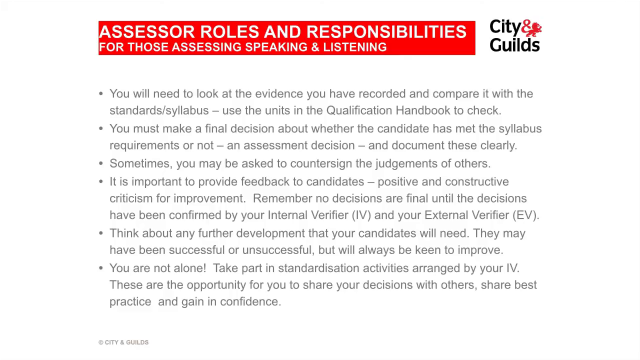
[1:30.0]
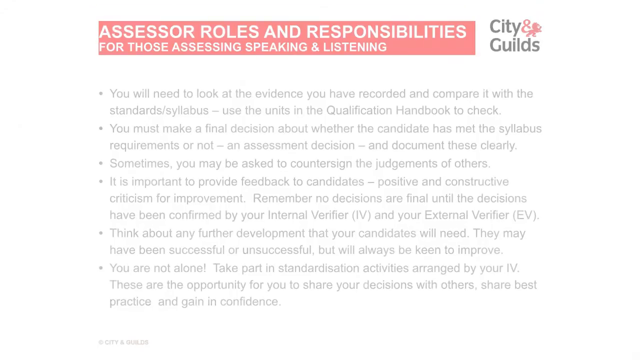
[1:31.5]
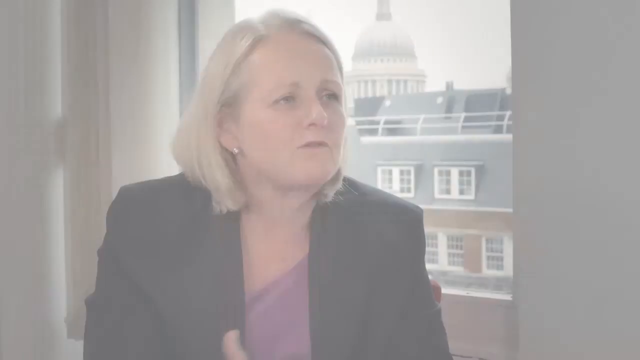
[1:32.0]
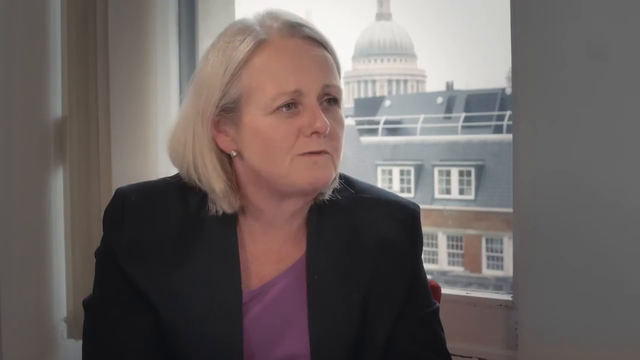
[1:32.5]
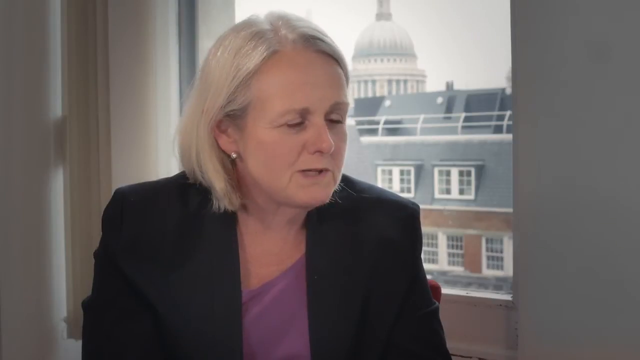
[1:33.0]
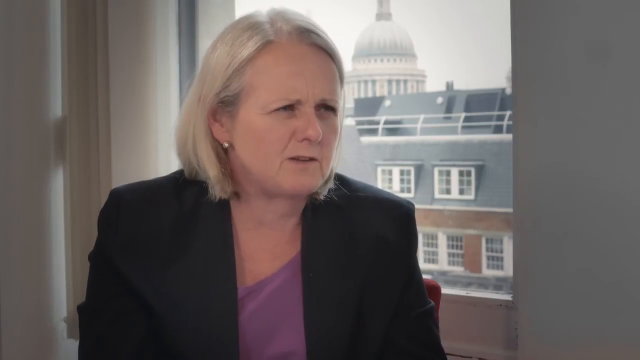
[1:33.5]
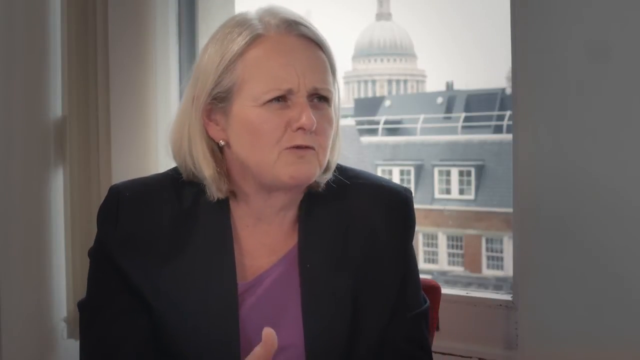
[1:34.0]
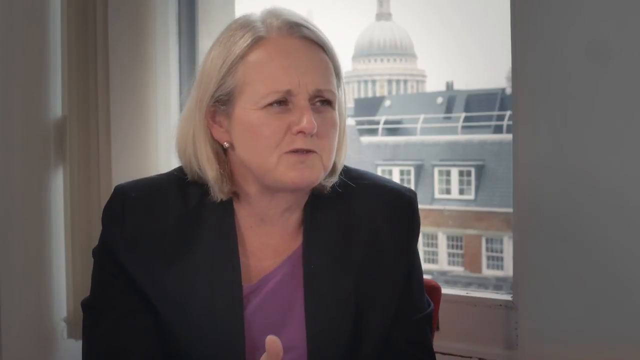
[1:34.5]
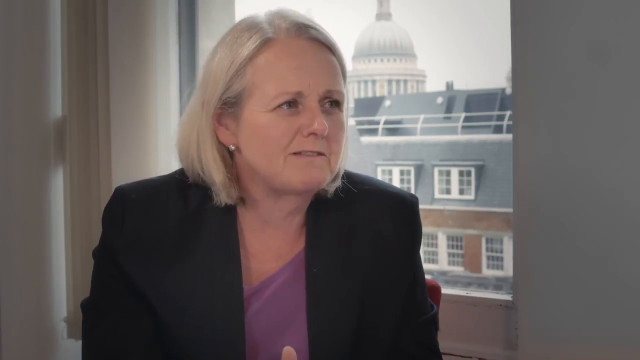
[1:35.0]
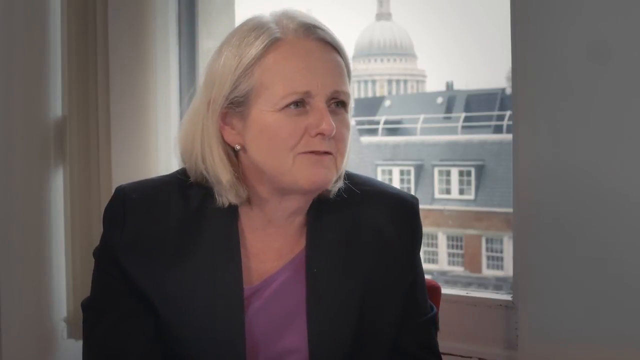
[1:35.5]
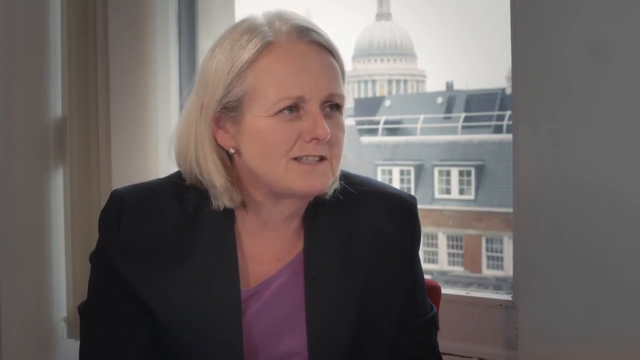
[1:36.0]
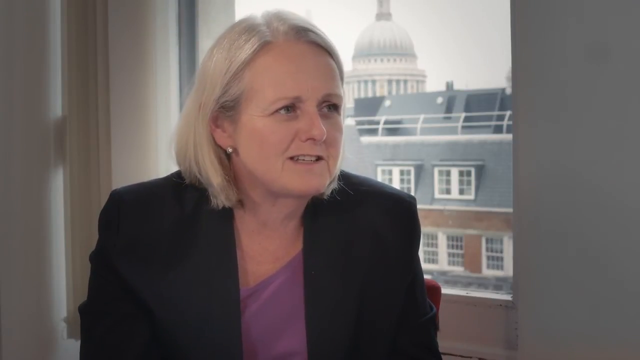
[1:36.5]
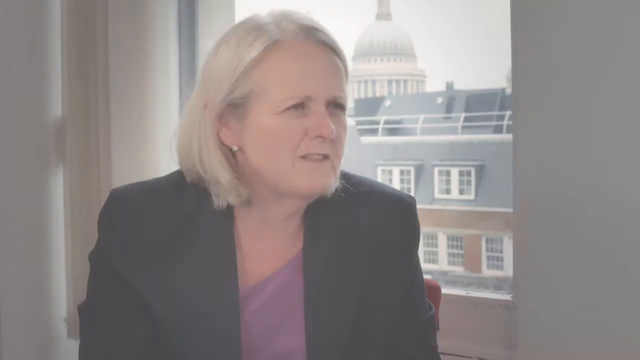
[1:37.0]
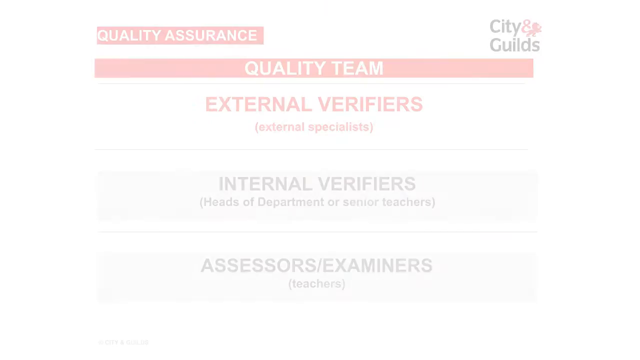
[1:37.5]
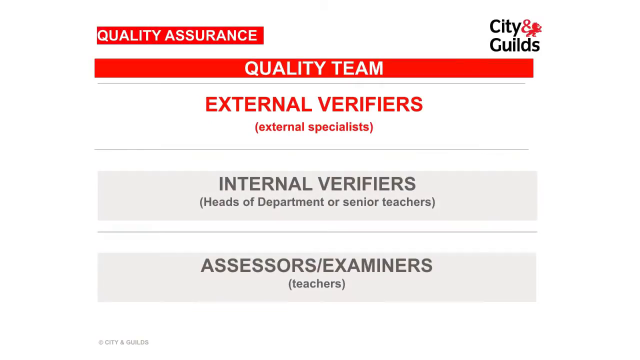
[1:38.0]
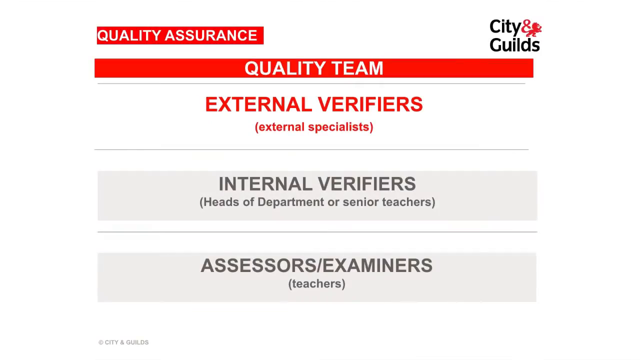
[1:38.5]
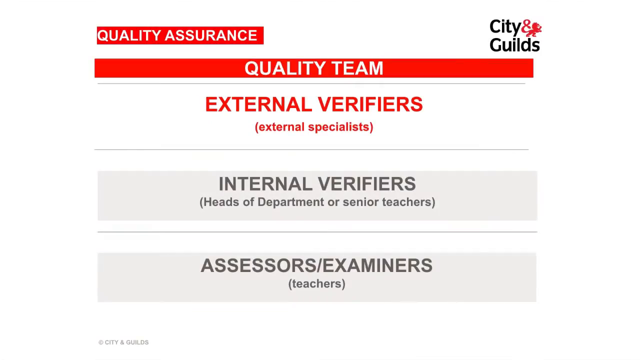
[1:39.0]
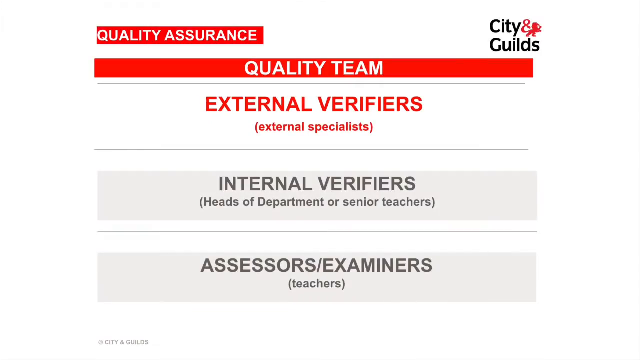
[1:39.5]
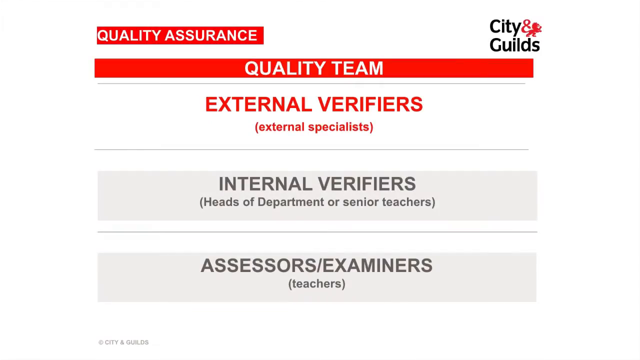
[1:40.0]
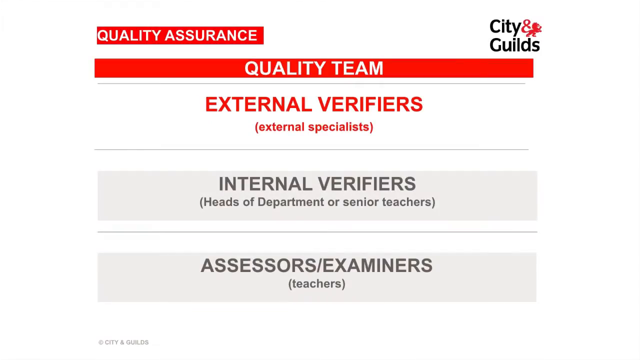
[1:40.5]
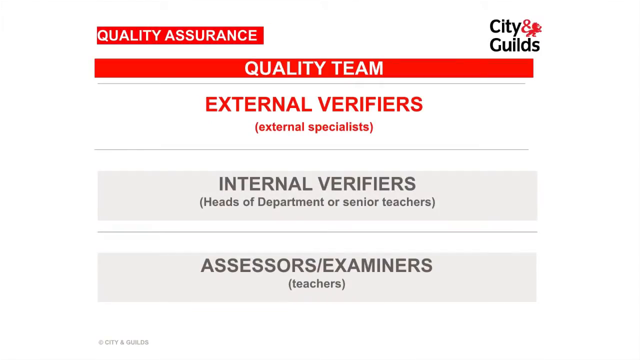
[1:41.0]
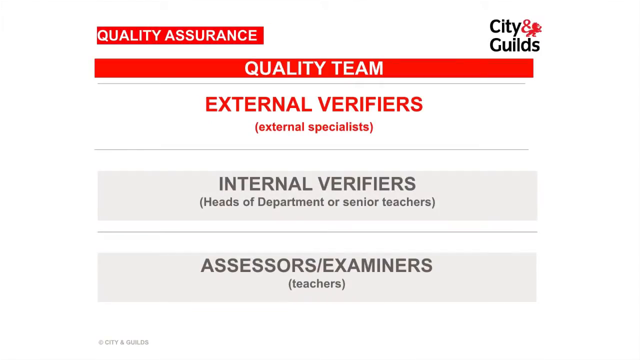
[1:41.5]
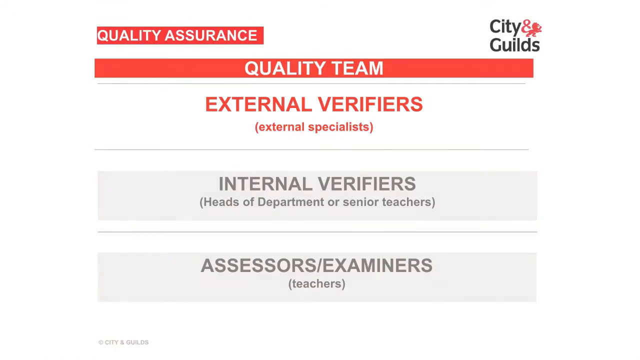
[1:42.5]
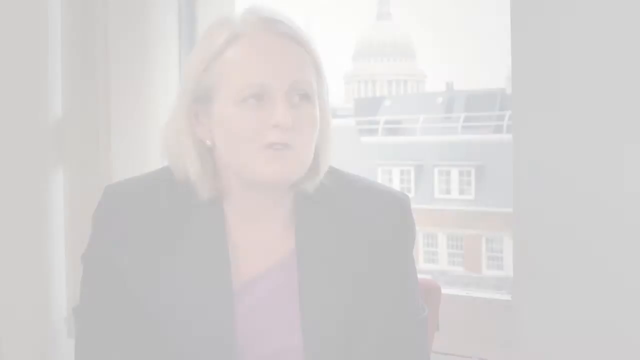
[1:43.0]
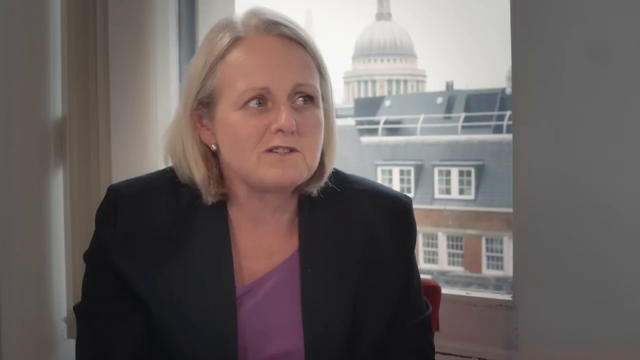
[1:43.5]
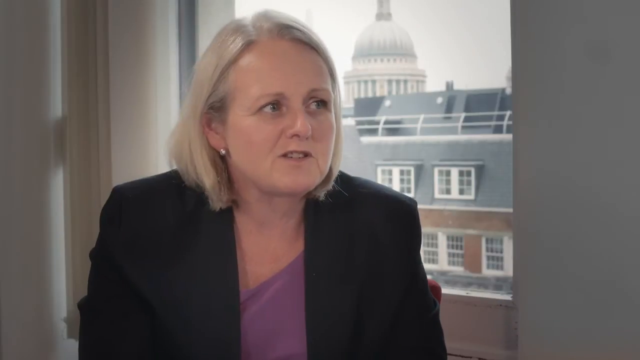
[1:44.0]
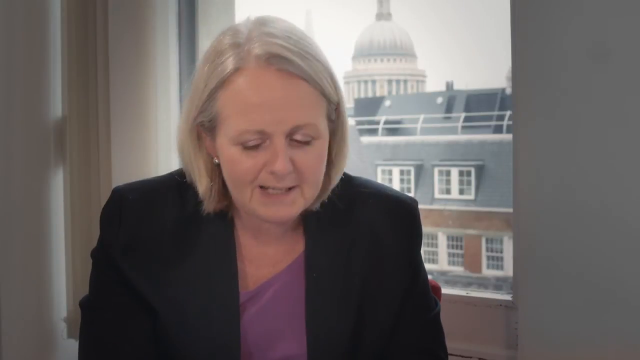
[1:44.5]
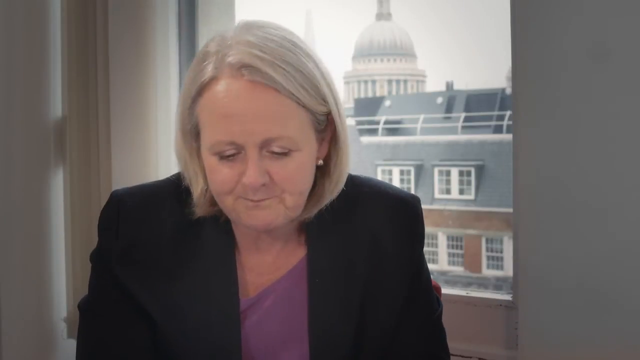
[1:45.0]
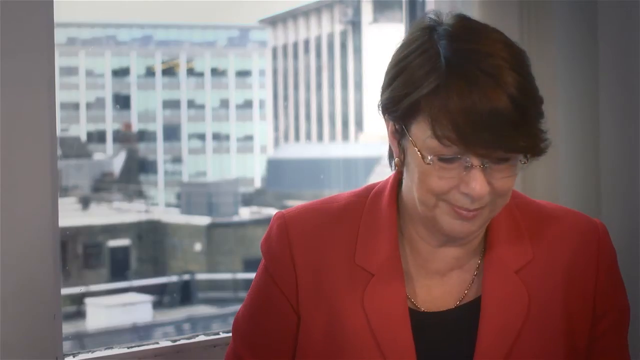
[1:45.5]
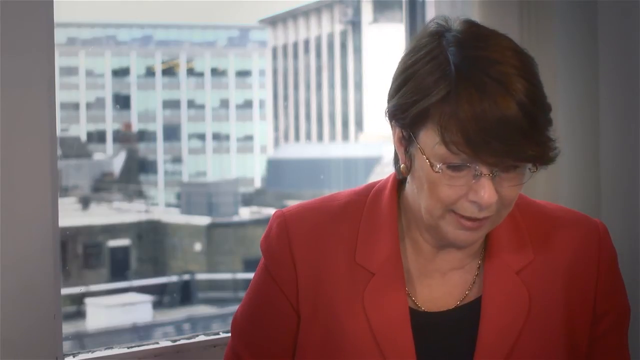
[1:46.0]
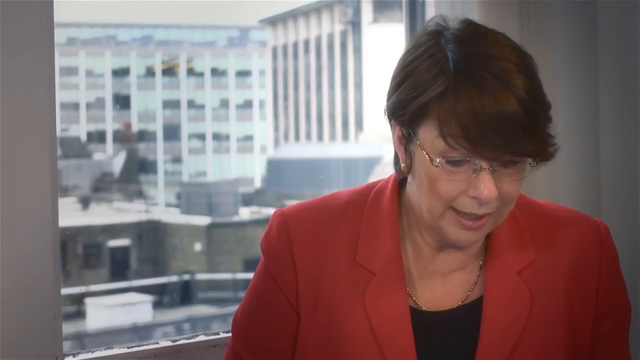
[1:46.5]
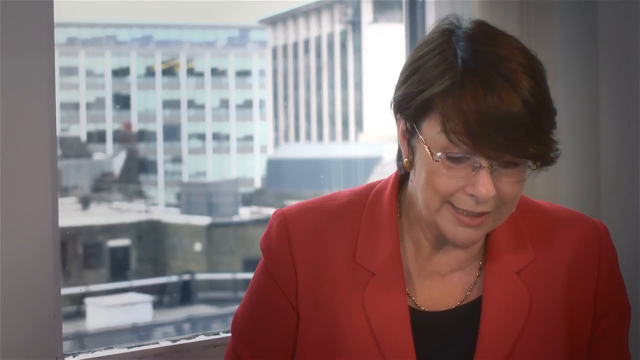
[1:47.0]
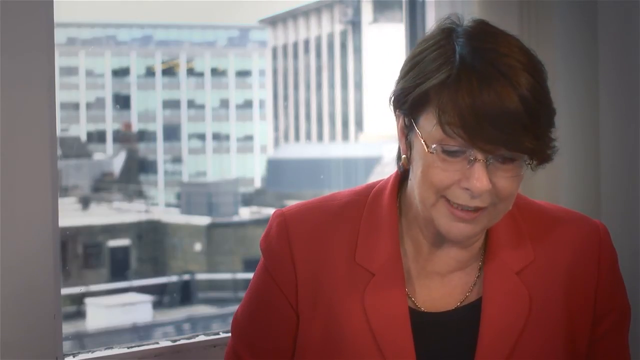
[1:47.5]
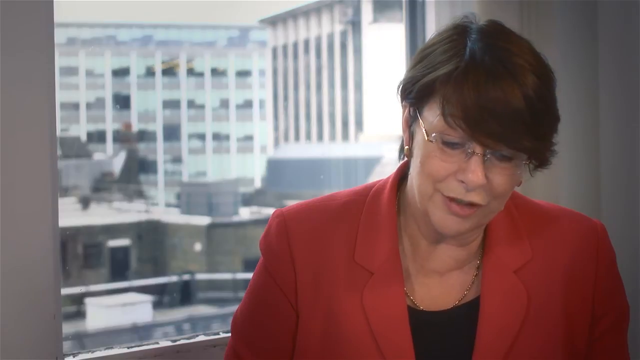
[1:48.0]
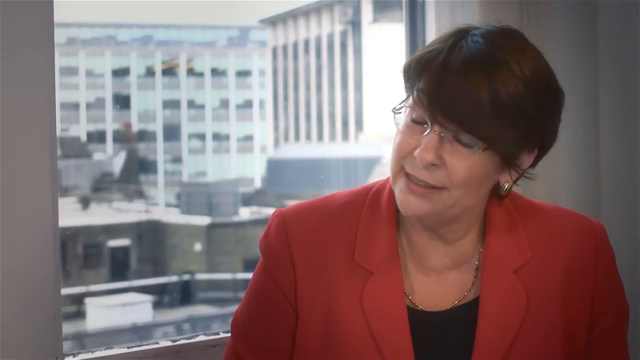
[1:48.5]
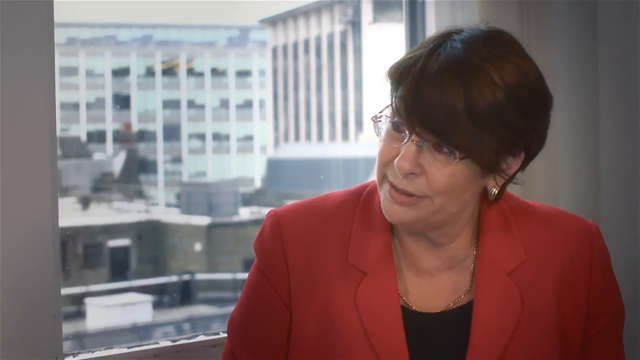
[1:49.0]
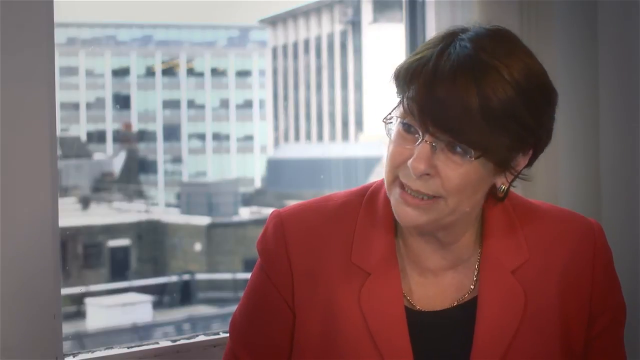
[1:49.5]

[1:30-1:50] The scene returns to the woman in the black blazer with a purple shirt underneath and short blonde hair, sitting in front of a window with a kind of government building in the background and talking to someone to her left. The screen then transitions to a white screen with red letters at the top reading "quality assurance, quality team, external verifiers, external specialists, internal verifiers, heads of department and senior teachers and assessors, examiners, teachers." It then goes back to the woman in the pink shirt, black blazer and blonde hair, speaking with the woman in the red blazer, black shirt and brown hair; they speak back and forth. The video then returns to the assessor roles and responsibilities slides.